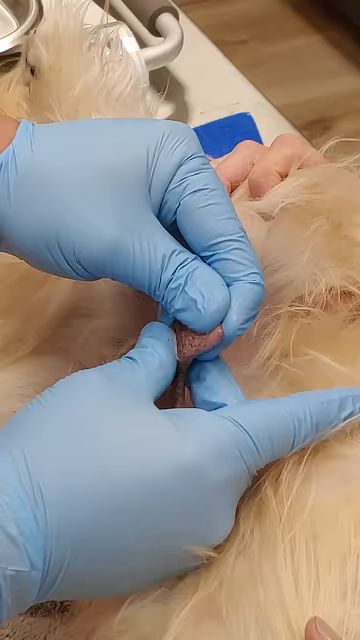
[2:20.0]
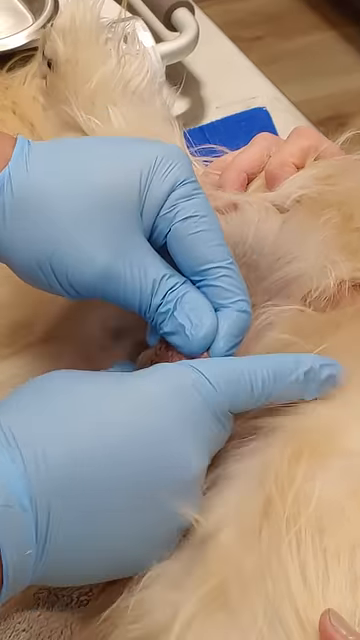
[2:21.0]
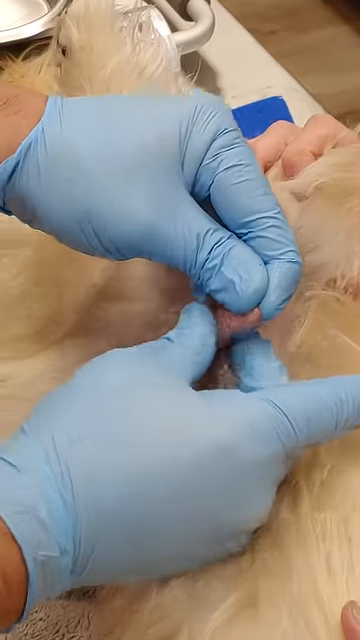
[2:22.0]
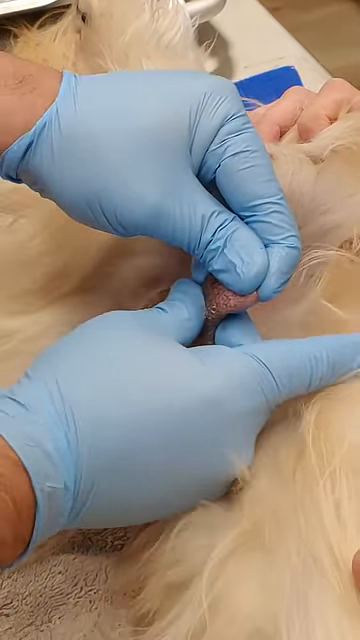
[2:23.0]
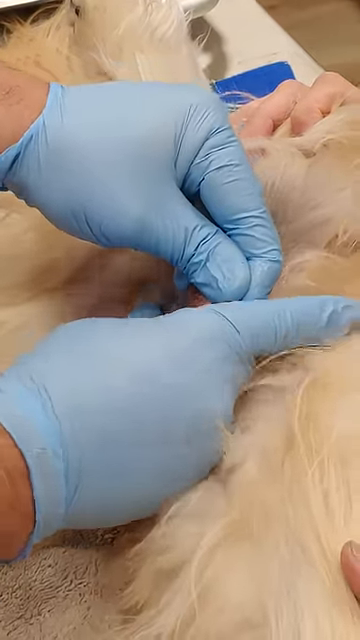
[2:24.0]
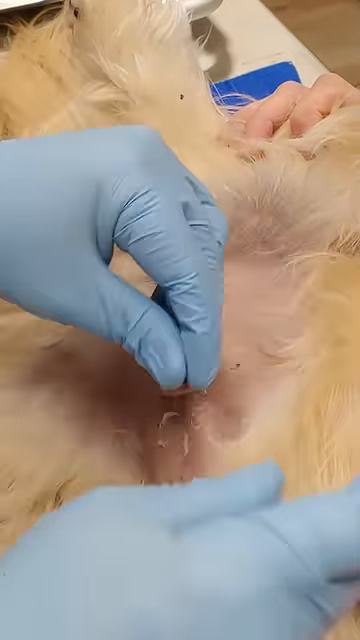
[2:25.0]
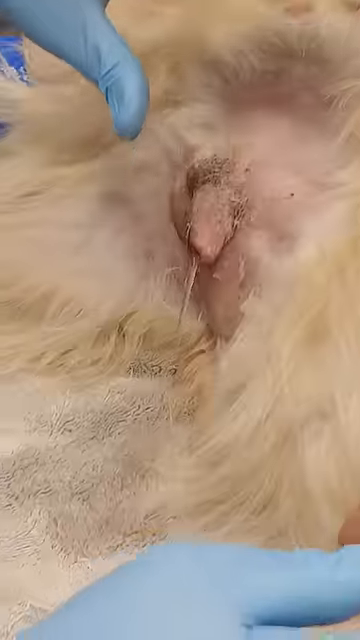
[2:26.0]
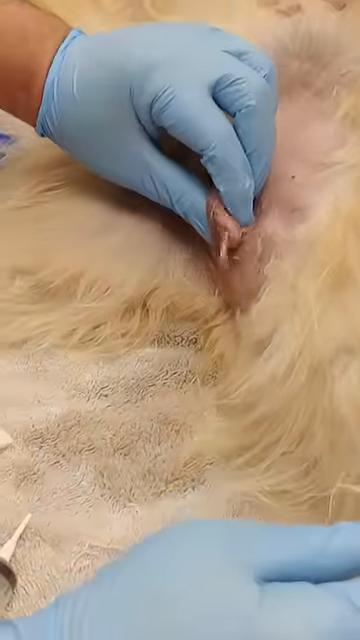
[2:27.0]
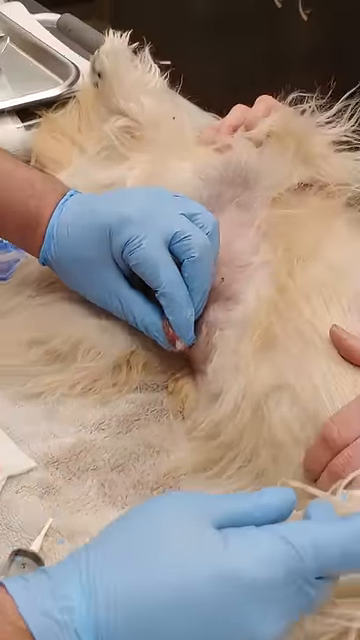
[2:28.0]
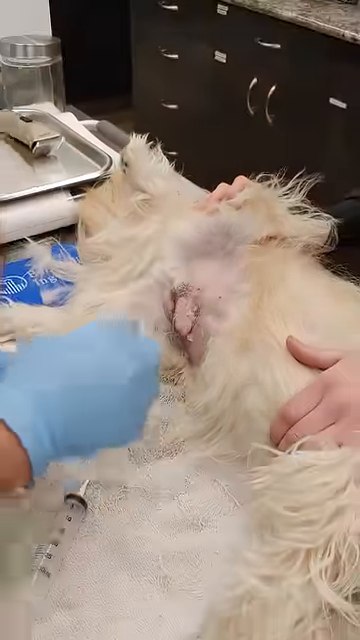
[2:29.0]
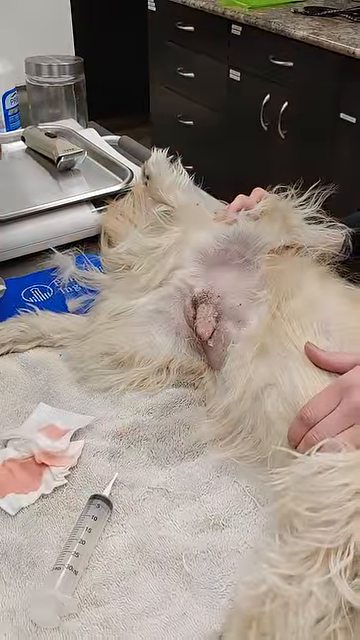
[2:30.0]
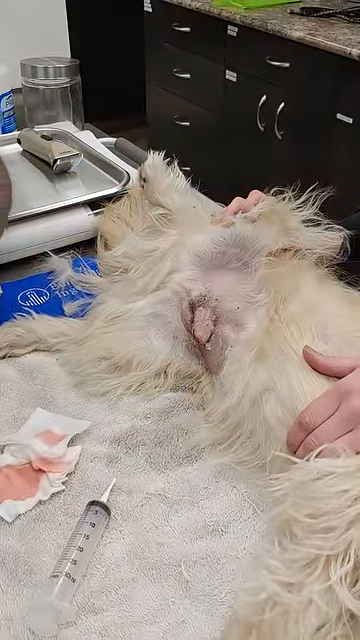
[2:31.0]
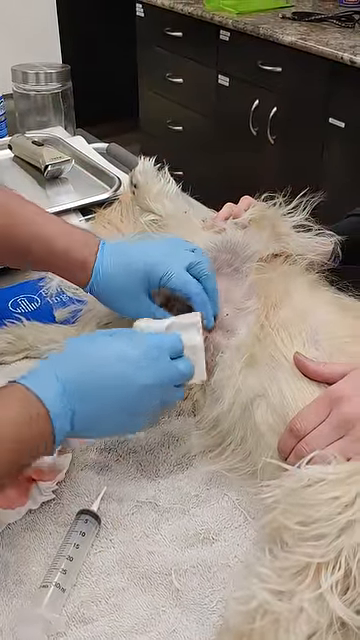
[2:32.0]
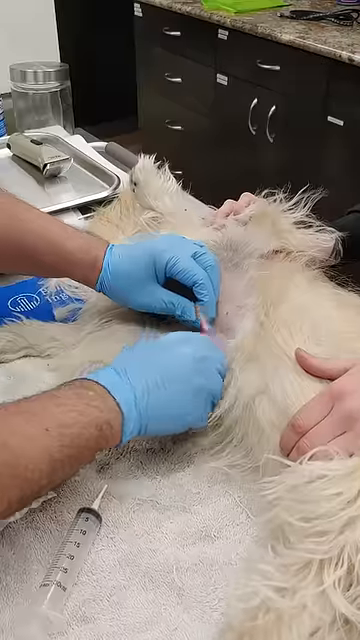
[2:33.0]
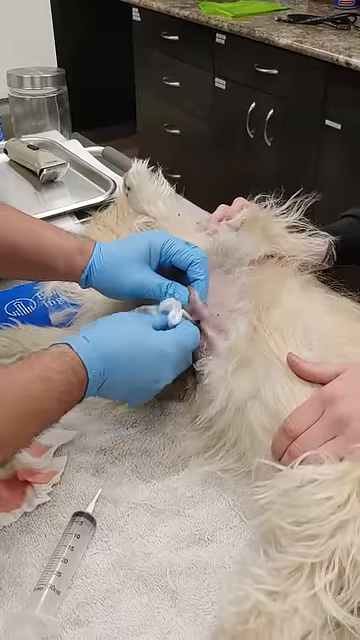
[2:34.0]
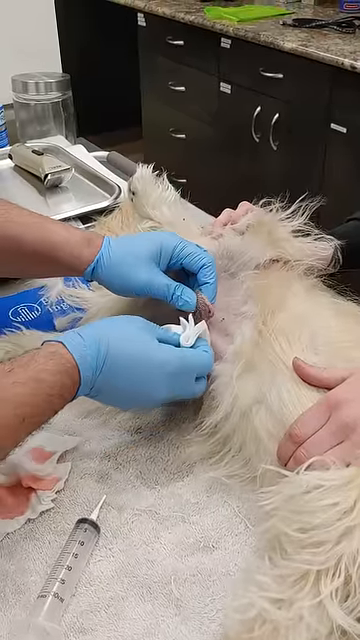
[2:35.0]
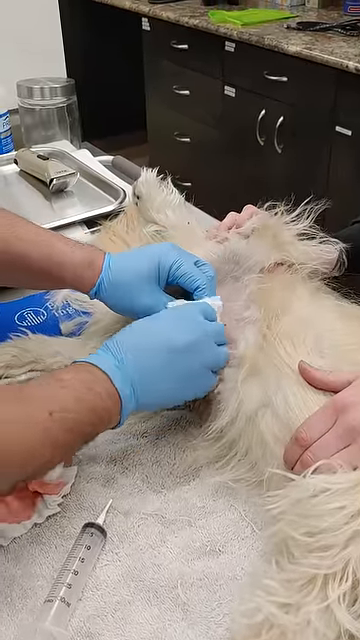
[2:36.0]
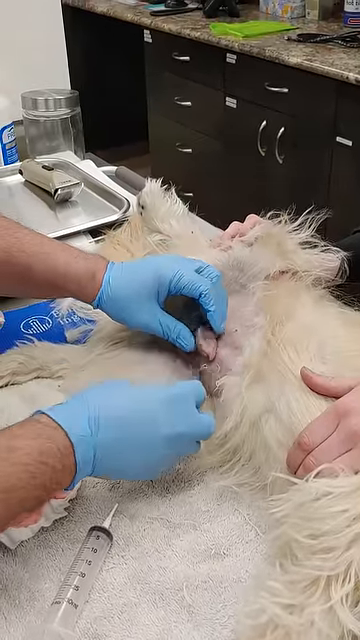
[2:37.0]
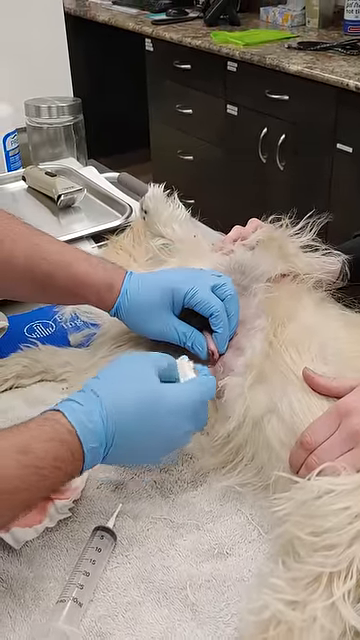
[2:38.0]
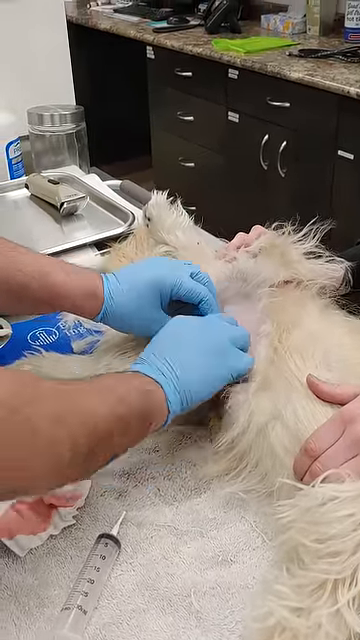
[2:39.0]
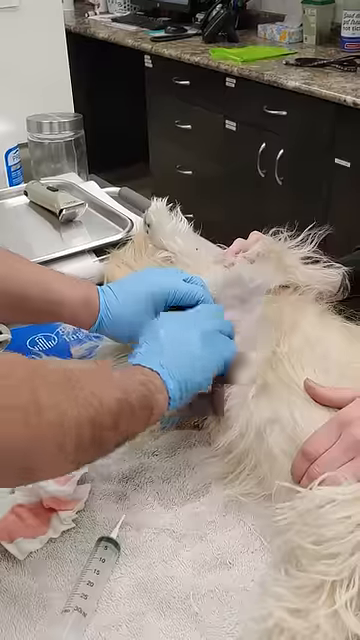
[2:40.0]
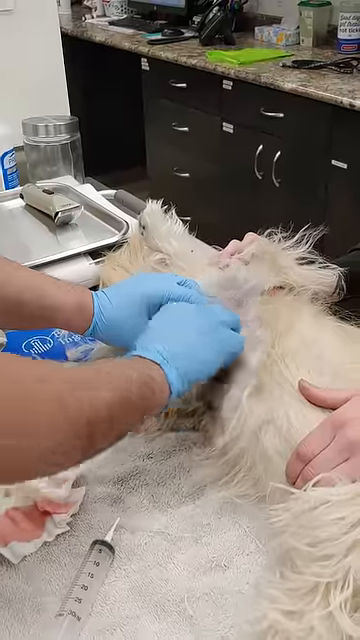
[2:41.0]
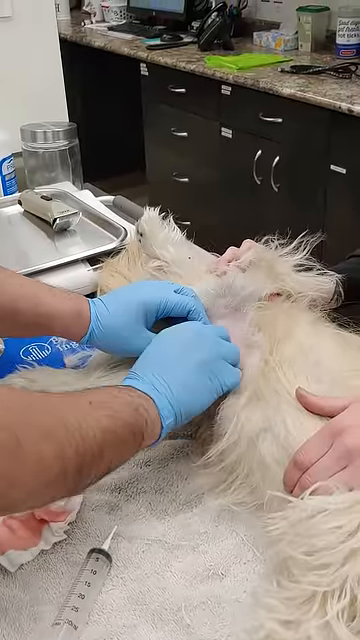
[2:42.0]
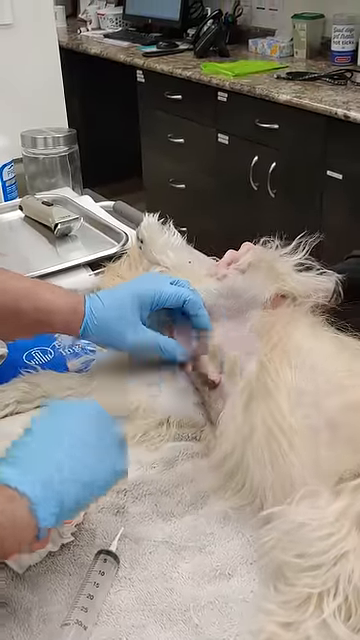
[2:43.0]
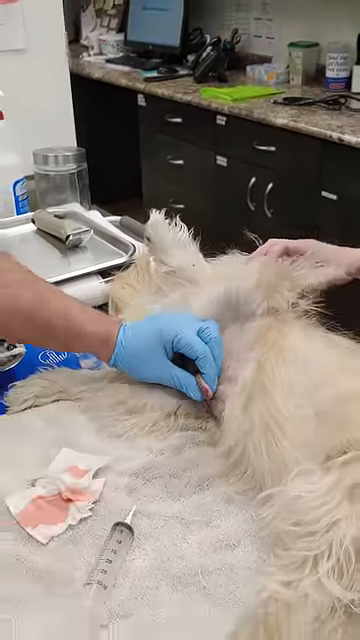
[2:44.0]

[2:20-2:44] The veterinarian works on the dog, which lies very still under anesthesia. He wears blue rubber gloves and has thick, full hands. The assistant has daintier hands with skinnier fingers; she wears no gloves and uses her hands to kind of help hold the dog's fur back. The vet uses a kind of pointy, catheter-type tool to put liquid inside and massages the dog's penis so the urethra takes in the liquid, probably flushing the area. He massages and squirts in the liquid, and as he kind of releases, fluid comes out of the penis onto a white fluffy towel underneath the dog. A stainless steel bowl is in the upper left corner of the frame.